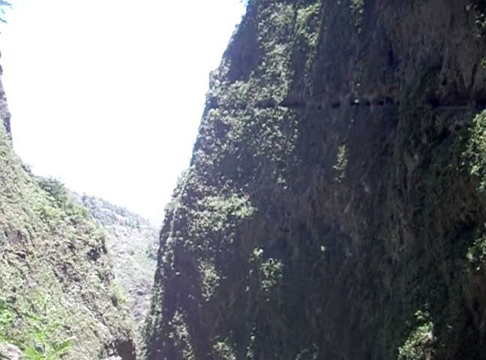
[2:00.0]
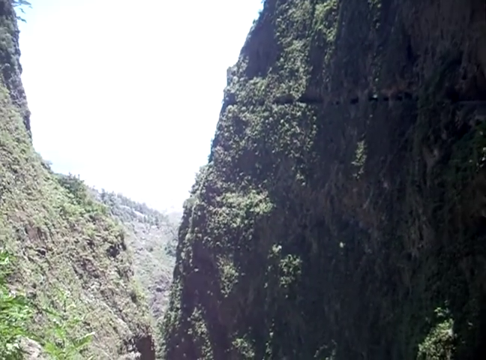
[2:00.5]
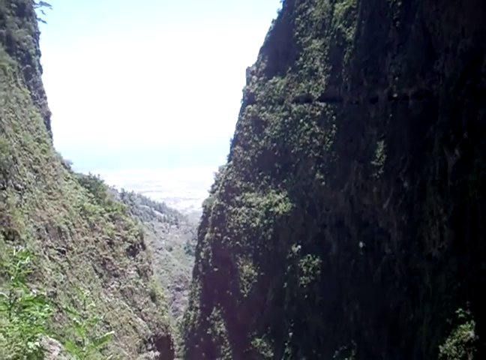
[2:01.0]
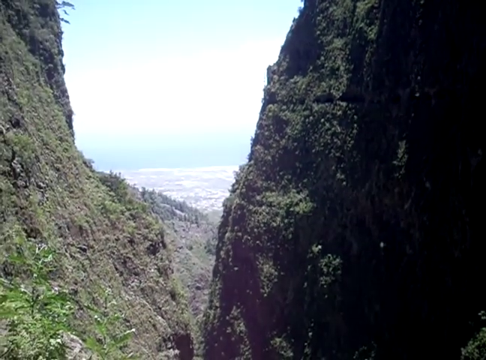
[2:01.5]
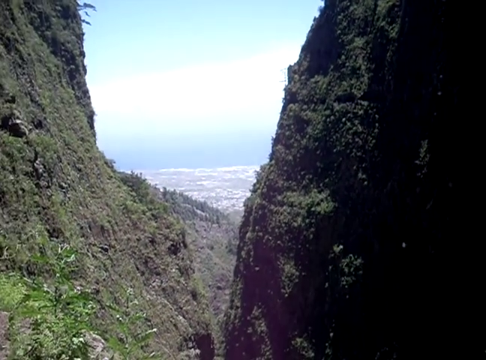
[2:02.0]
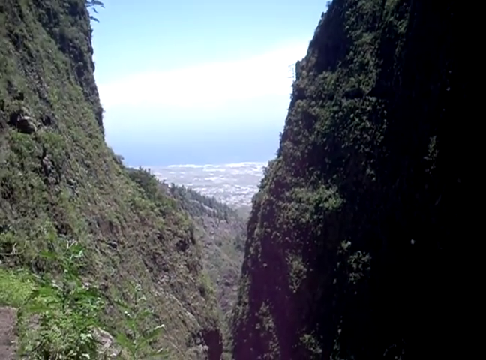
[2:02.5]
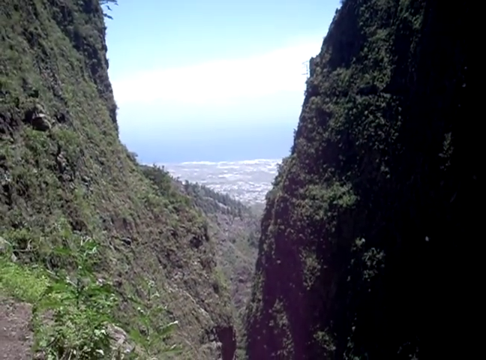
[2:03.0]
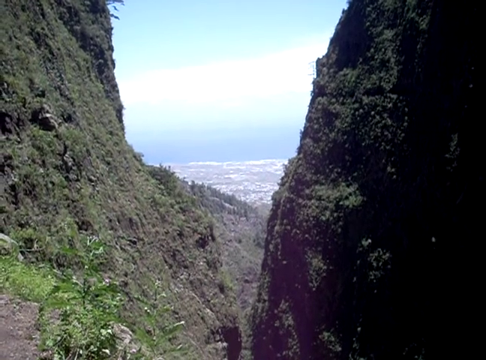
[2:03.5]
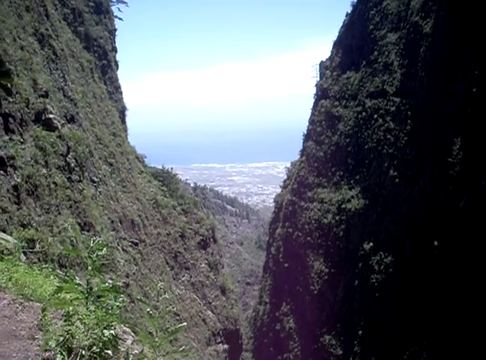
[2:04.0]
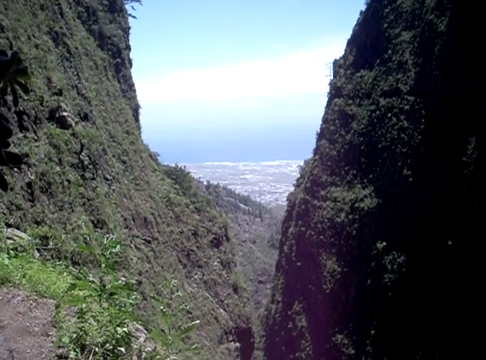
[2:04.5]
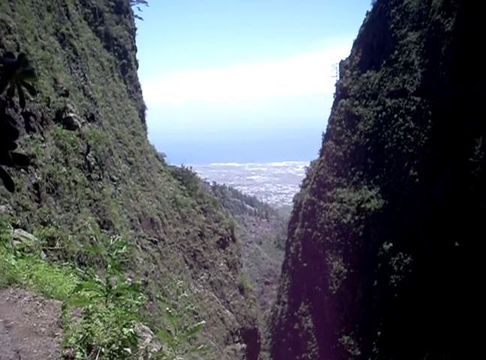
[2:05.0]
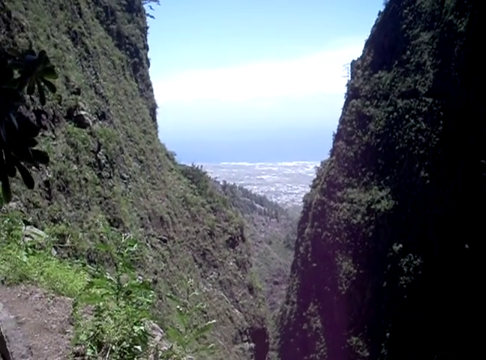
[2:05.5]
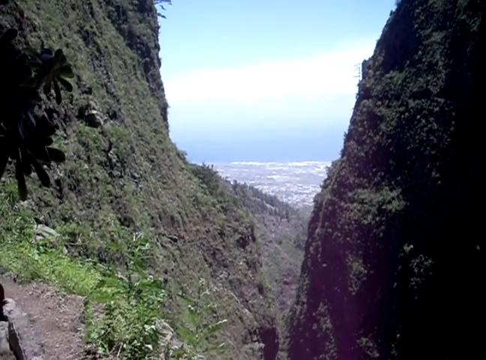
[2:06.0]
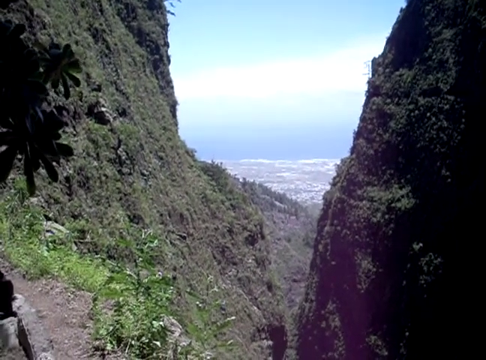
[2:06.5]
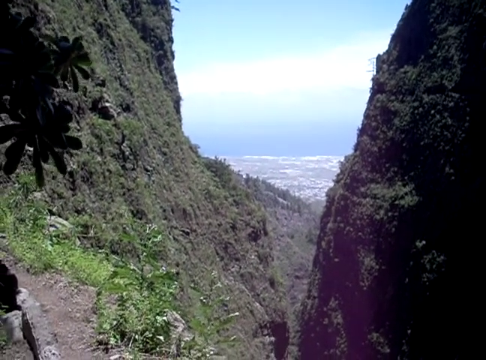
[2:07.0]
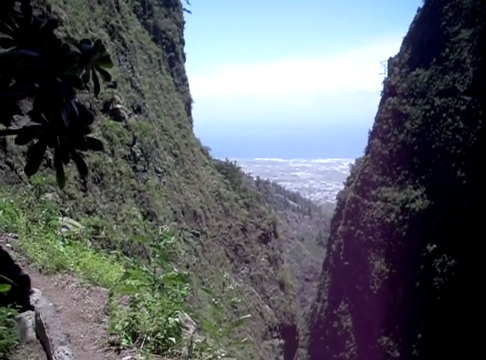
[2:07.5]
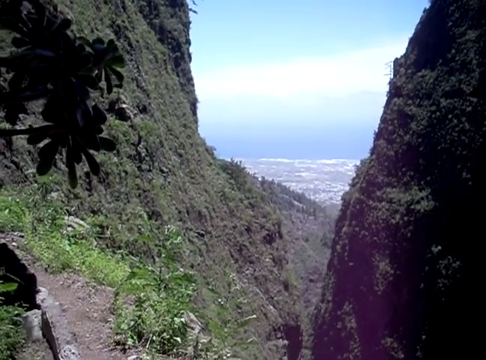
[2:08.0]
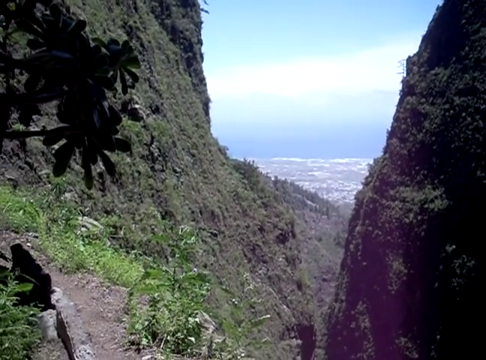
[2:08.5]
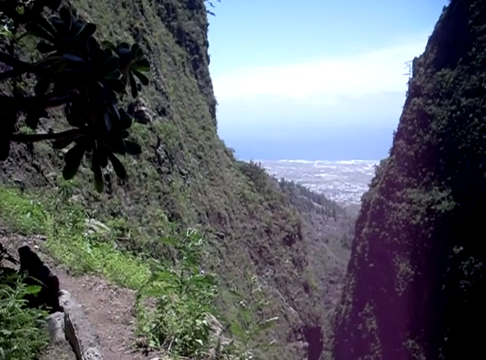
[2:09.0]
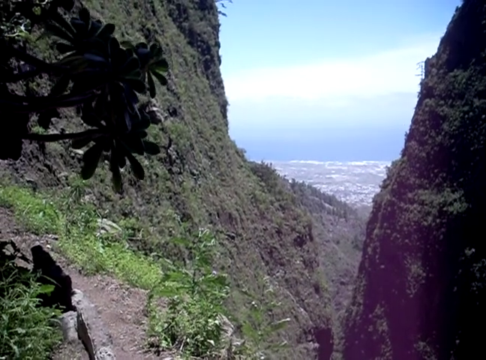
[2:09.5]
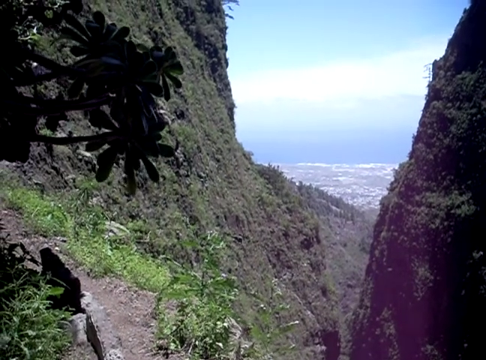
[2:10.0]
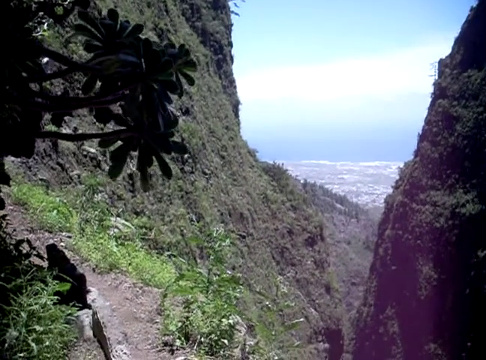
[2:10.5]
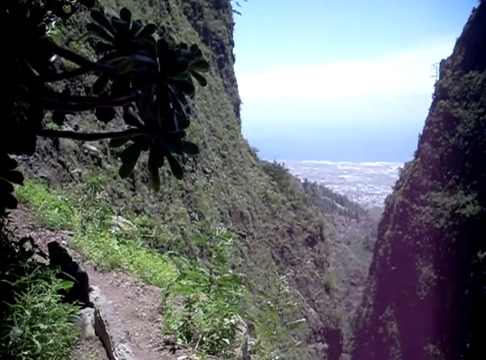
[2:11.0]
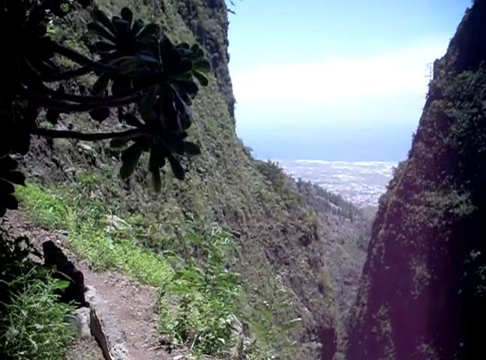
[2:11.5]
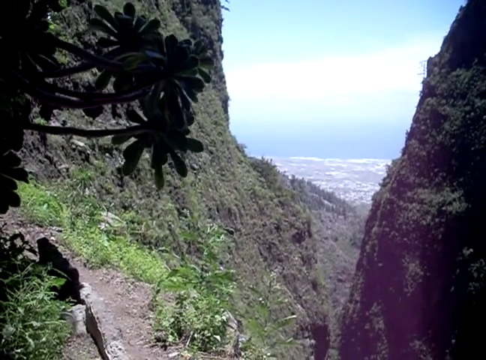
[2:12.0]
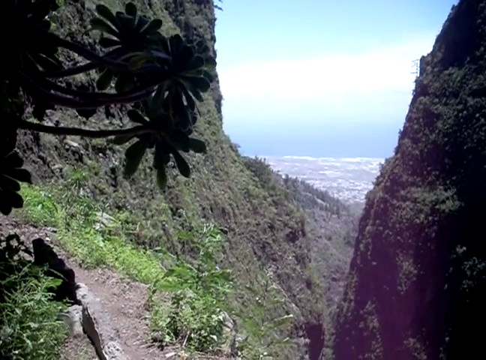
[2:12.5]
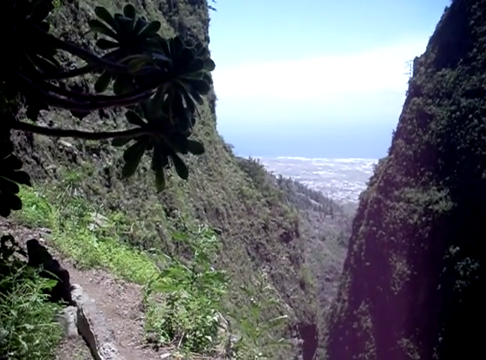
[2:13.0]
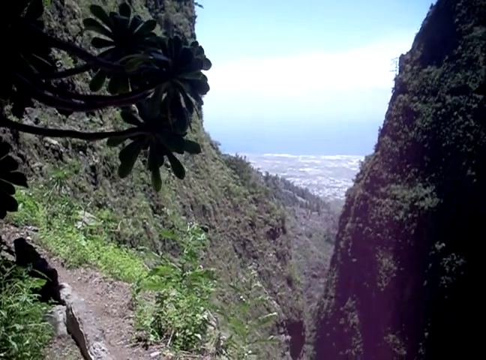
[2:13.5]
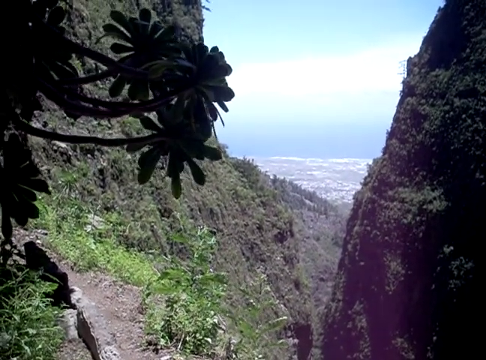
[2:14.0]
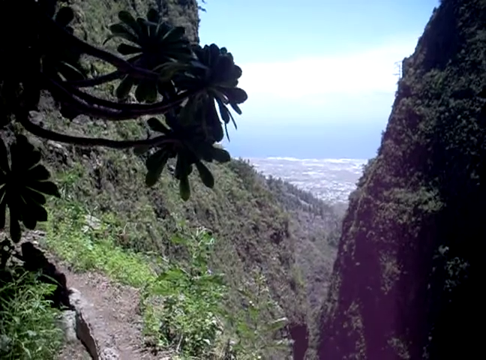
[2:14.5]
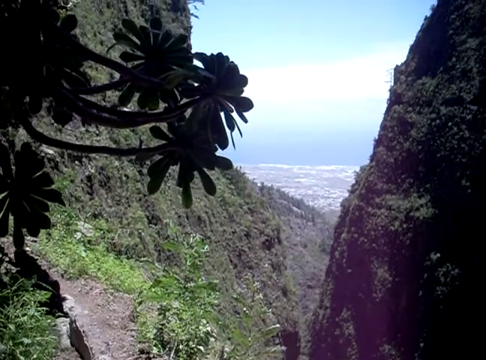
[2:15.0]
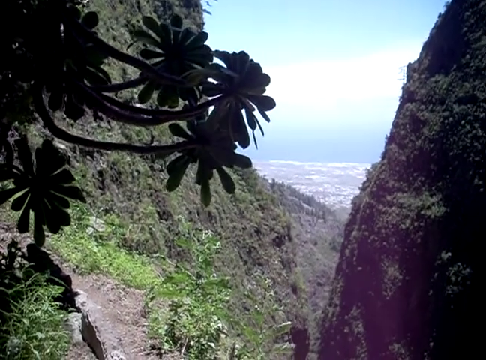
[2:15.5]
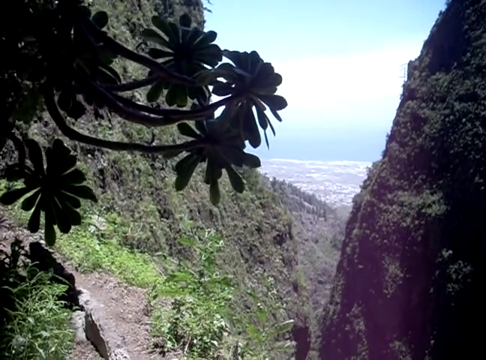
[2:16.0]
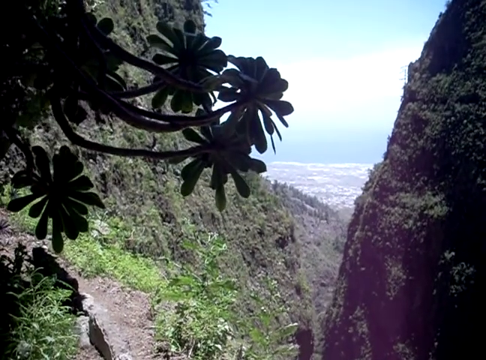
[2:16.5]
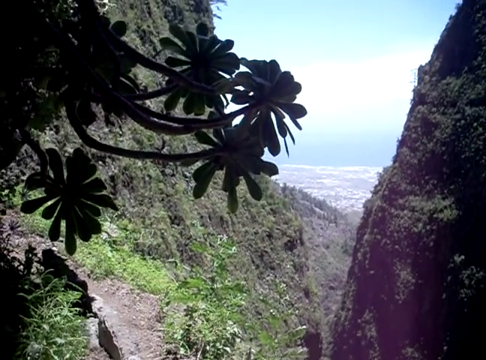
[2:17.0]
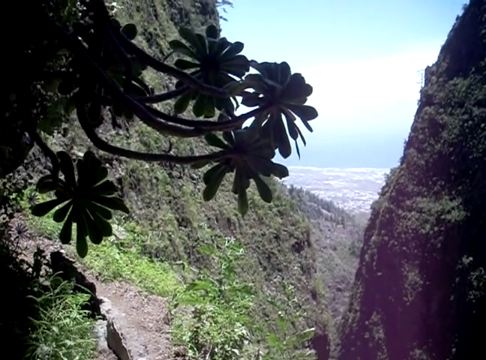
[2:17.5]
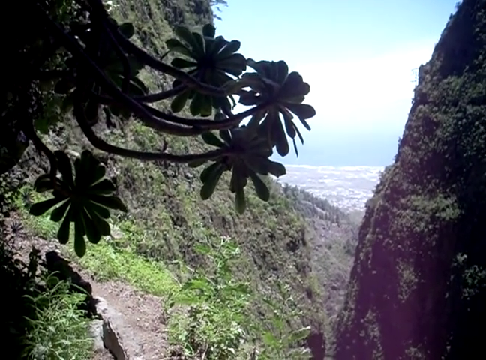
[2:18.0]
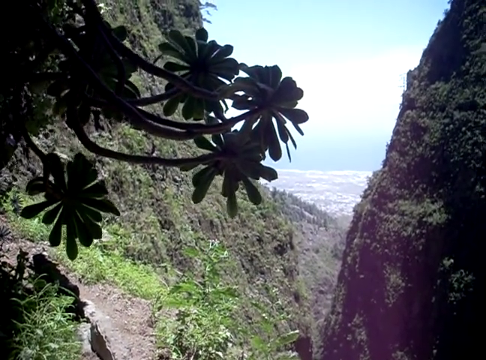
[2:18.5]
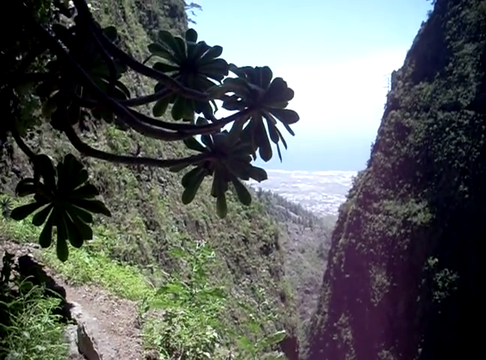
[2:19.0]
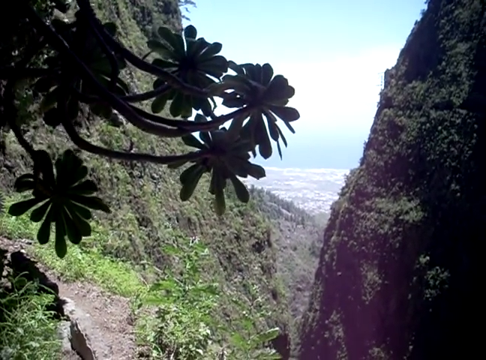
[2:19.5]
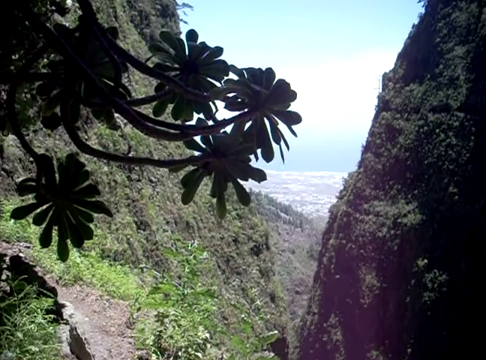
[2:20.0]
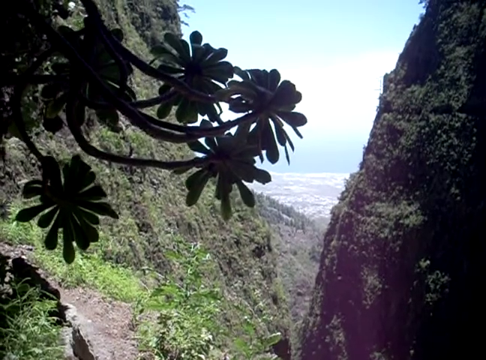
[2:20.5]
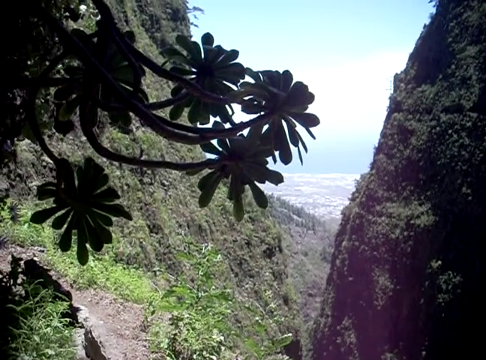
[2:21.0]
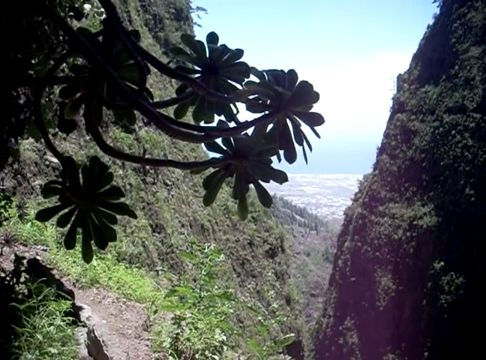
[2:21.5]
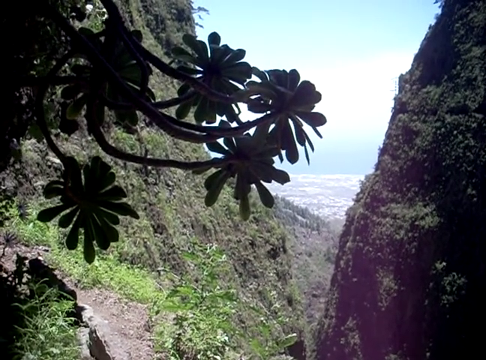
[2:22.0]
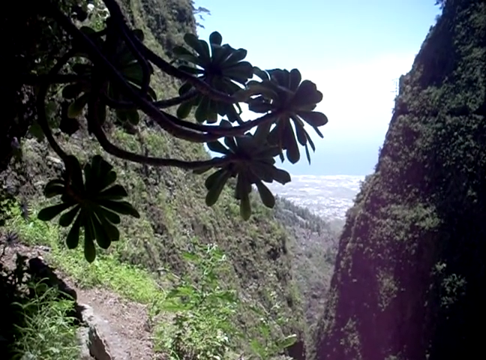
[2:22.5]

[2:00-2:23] The view stares out one of the holes in the mountain toward the opening to see the sky. The sky is bright blue with little shades of white cloud above. The sun itself is not visible, but it appears to be daytime given the shade of blue. A tree growing on the left-hand side appears rather large, and the view looks at it and its leaves, as well as the vegetation growing on the side of the mountain and the sheer height of the mountain. Looking down, it appears very high up, and looking straight ahead nothing appears as high as this area, so the viewpoint appears to be at a peak or summit. White is visible in the distance, but there is no snow, so it appears to be summer or springtime.